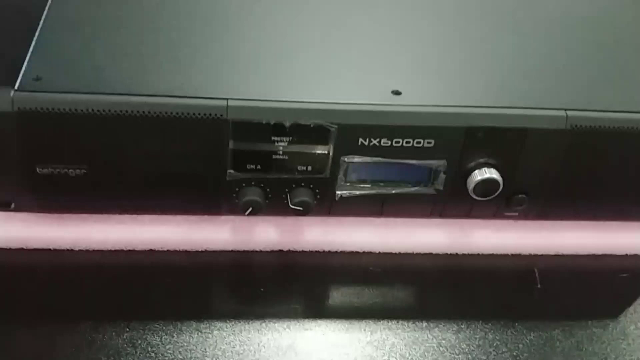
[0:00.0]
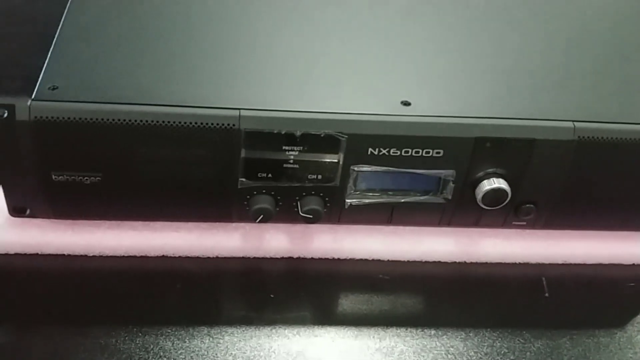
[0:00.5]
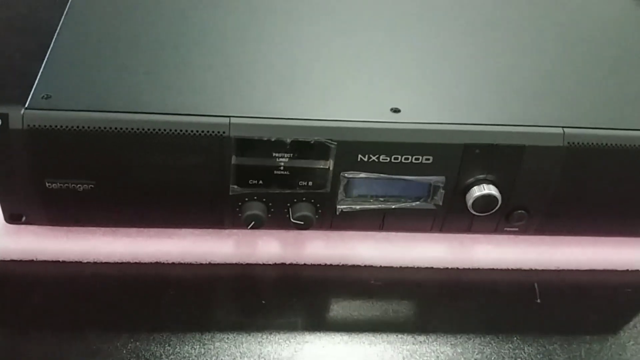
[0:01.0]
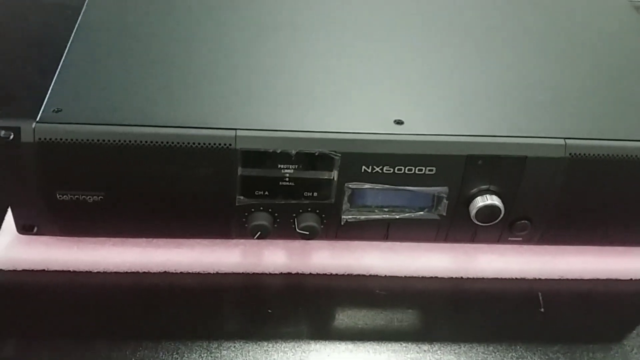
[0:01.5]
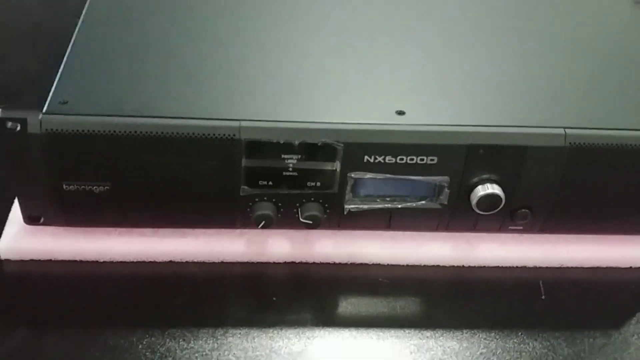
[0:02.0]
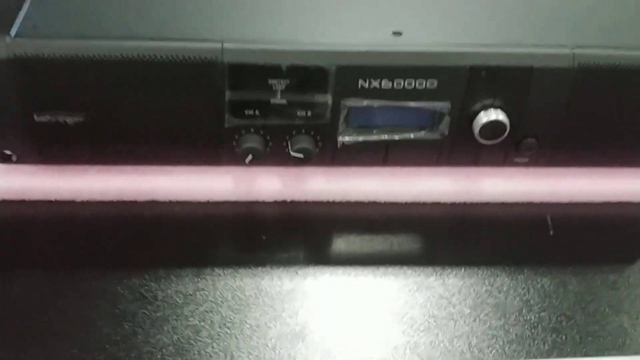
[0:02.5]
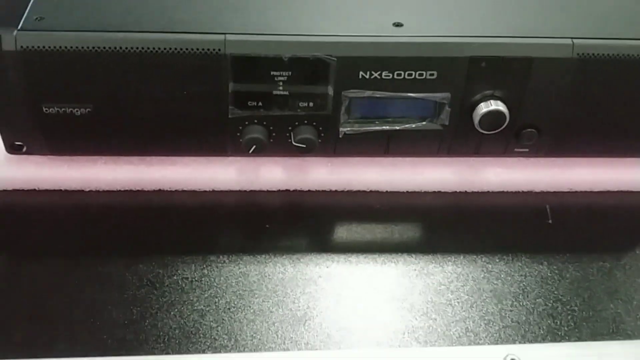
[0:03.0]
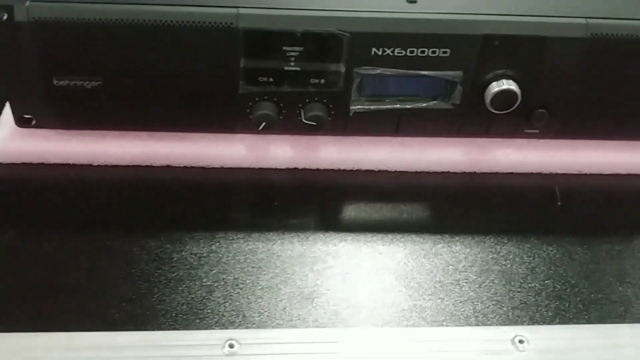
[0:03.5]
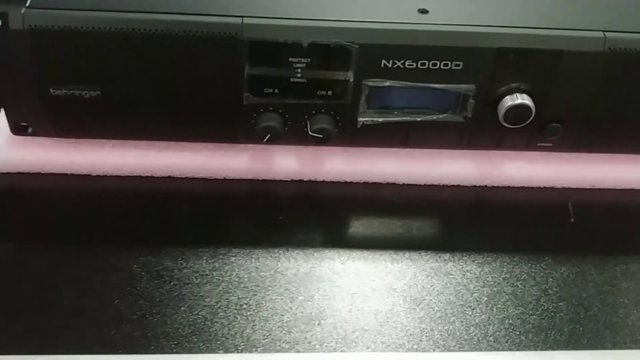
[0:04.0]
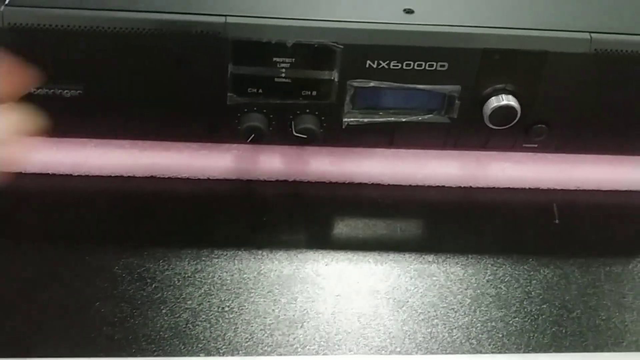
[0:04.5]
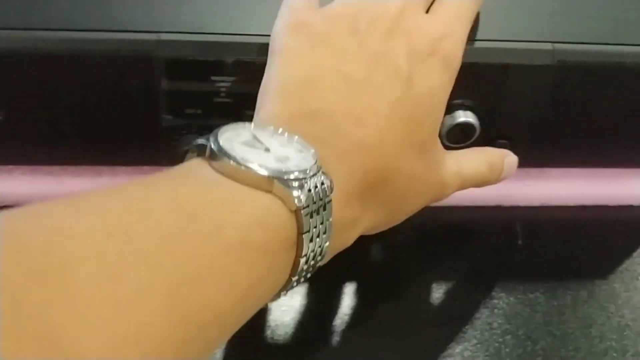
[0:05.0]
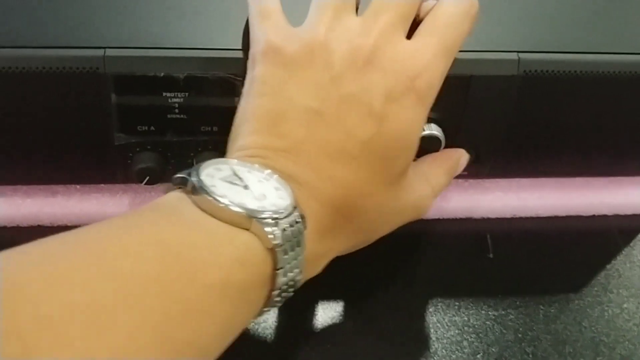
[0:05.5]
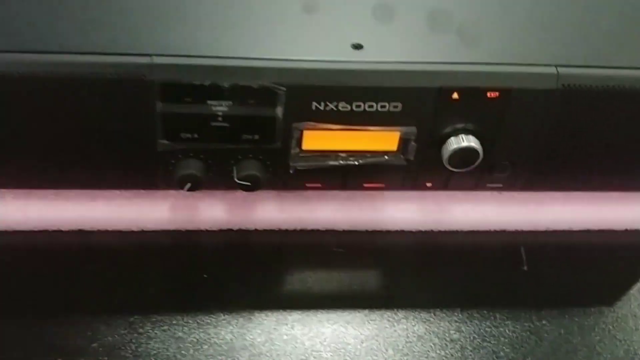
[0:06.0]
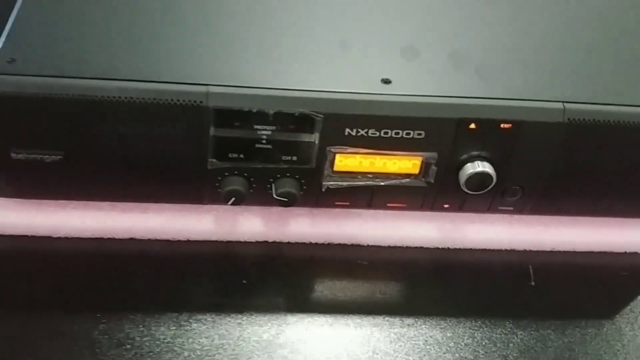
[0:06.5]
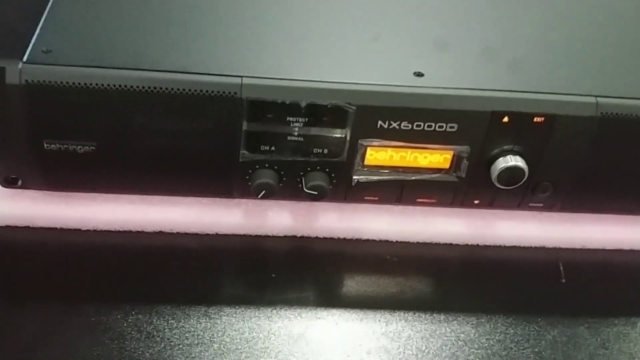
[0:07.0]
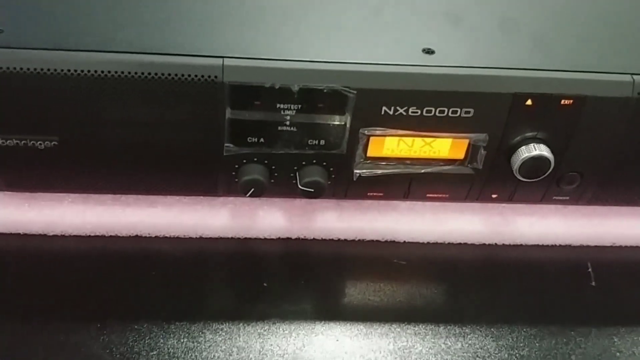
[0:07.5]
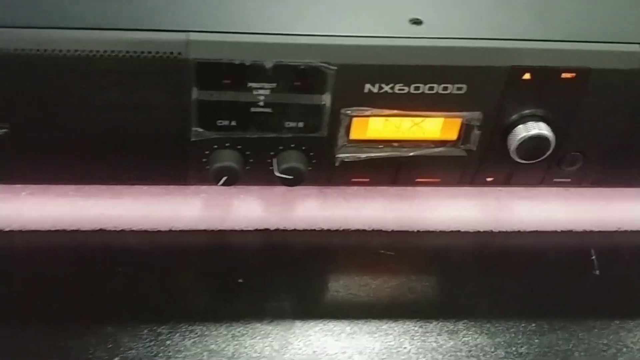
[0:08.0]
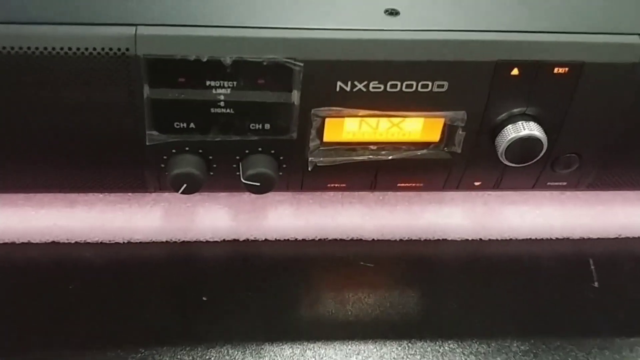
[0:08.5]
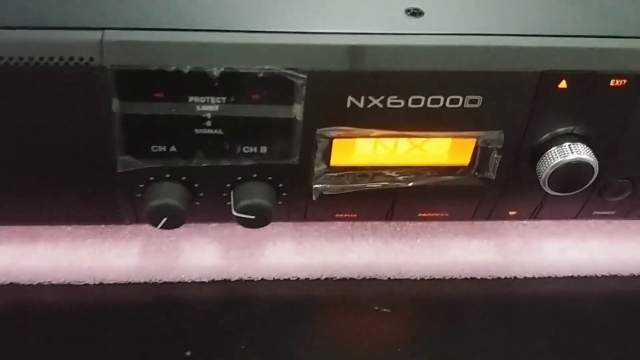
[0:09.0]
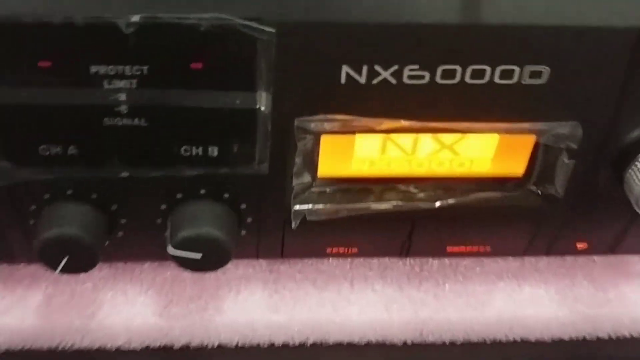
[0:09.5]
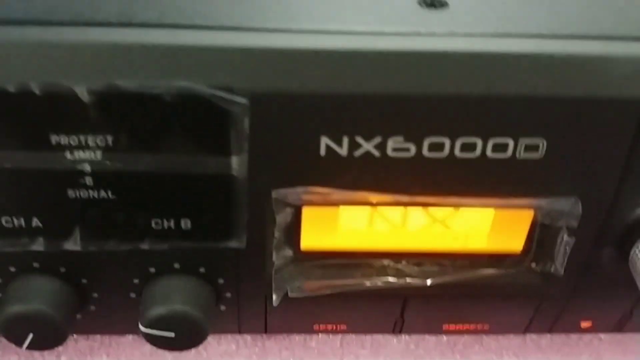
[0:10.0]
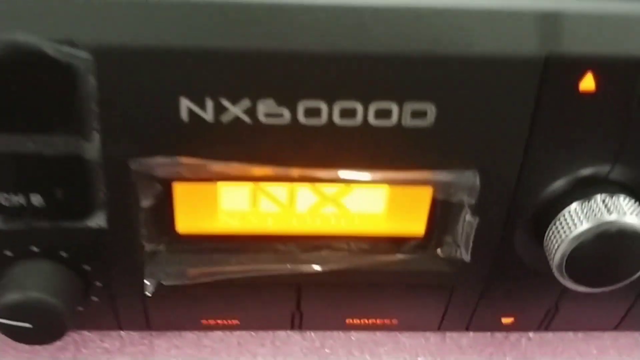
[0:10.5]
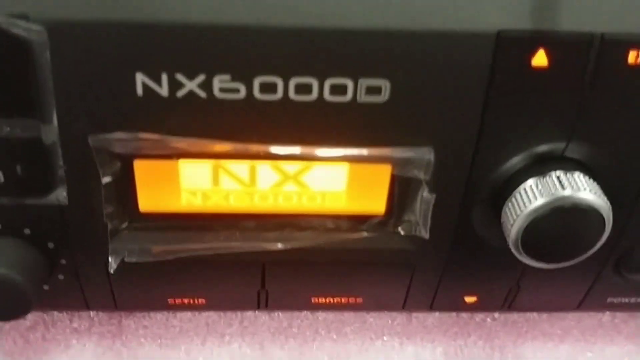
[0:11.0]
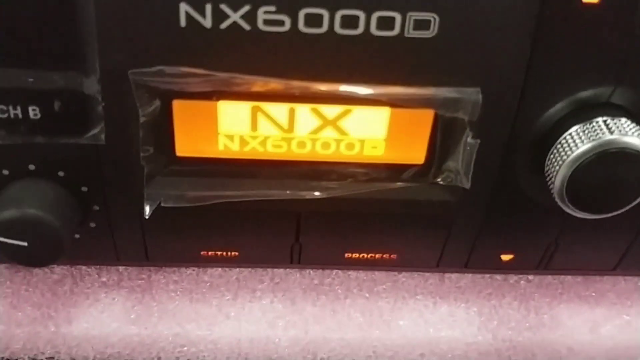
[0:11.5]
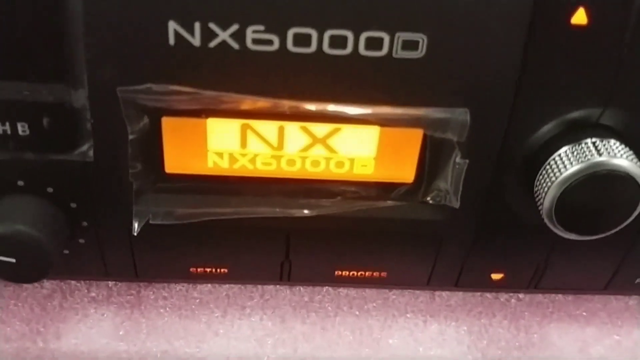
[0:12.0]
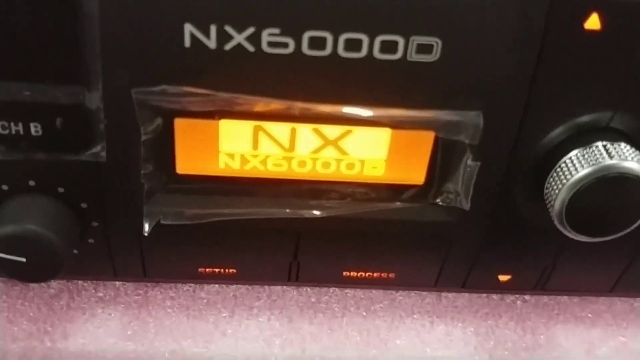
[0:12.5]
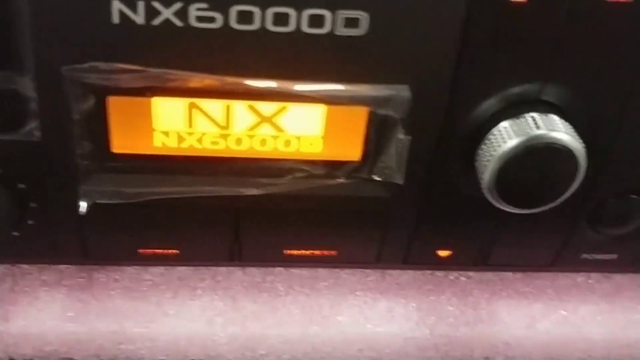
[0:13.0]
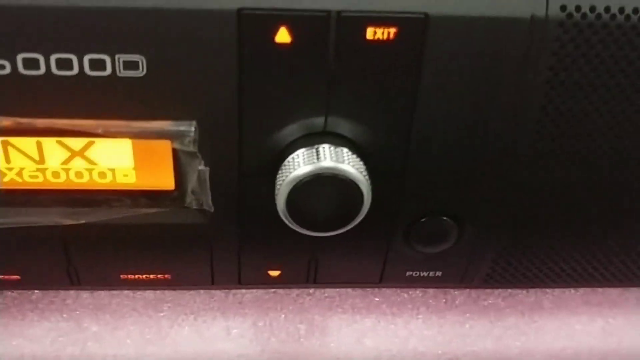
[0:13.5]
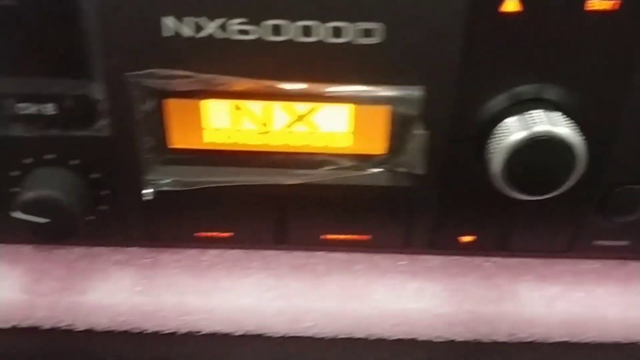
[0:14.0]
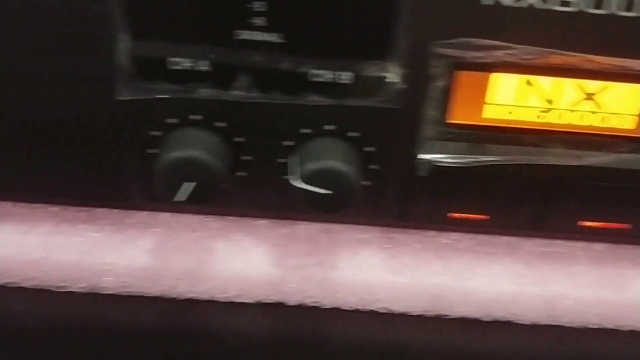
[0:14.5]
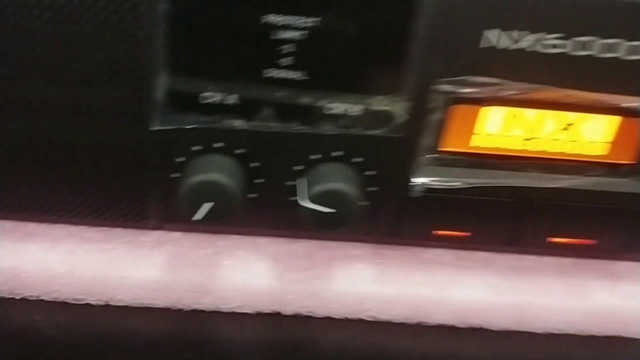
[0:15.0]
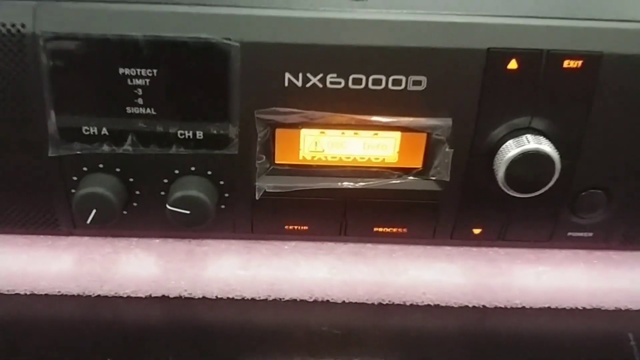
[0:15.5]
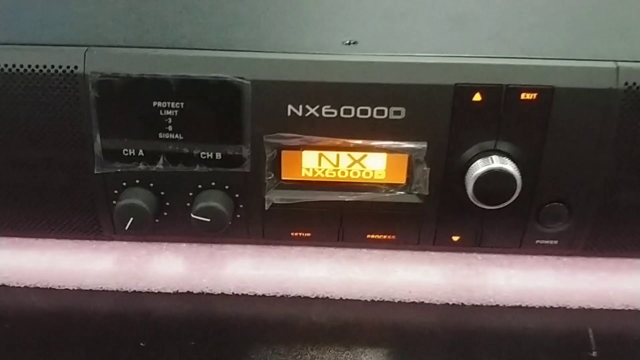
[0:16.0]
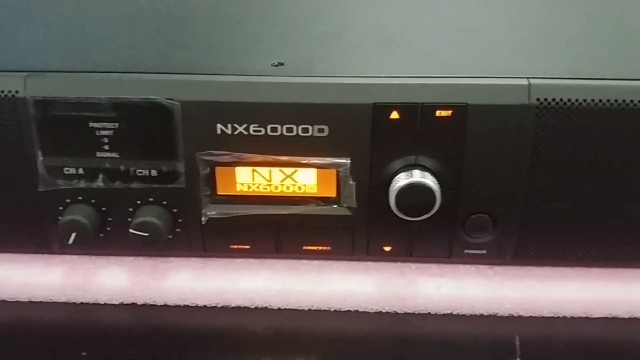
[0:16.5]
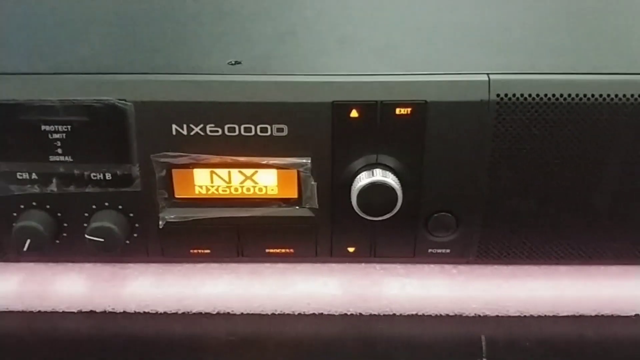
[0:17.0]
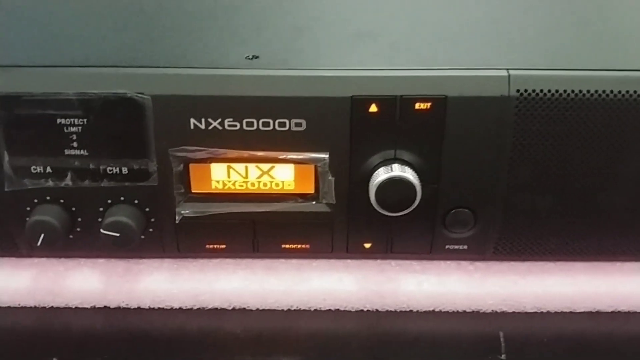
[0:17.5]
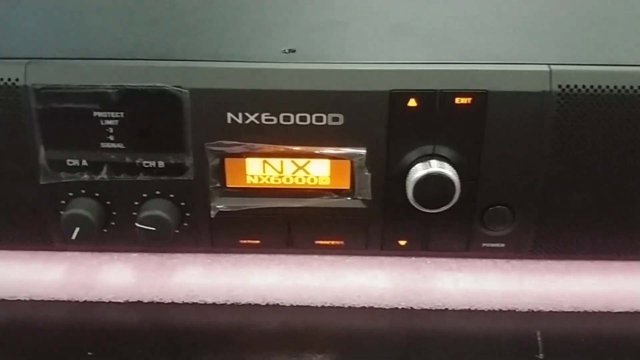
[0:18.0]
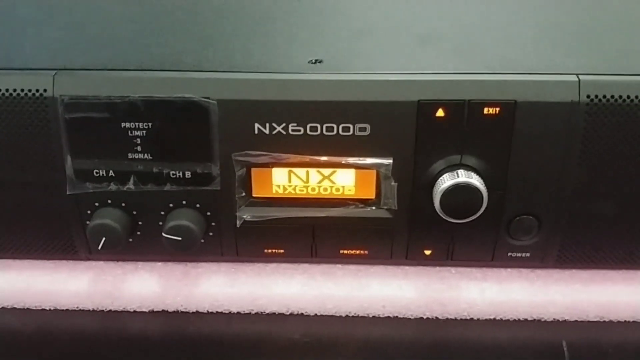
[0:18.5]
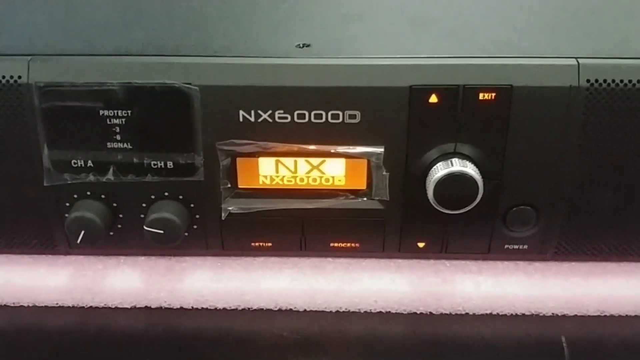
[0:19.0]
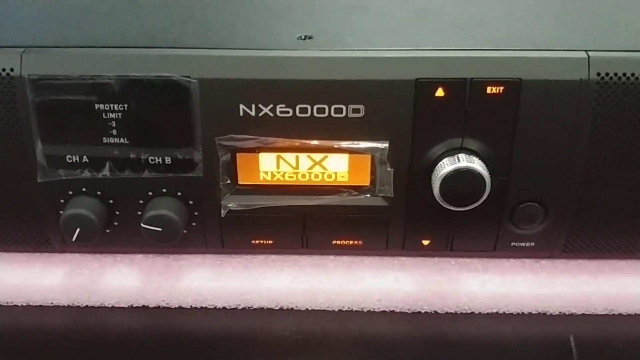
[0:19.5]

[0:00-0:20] A piece of audio-visual equipment is shown. A hand wearing a large silver metal watch appears and presses the power button to turn it on, and "NX6000D" becomes visible and illuminated. There is one knob on the right-hand side of an illuminated screen that has a silver rim. The illuminated screen says "NX" in big letters, with "NX6000D" below it. To the left of the screen are two black knobs, each with a white line on it, surrounded by small white dots indicating different levels. On the far left and far right are what look to be speakers, and there is an unreadable brand name on the left speaker. The equipment is black, and everything illuminated on it is orange after the power button is pressed.